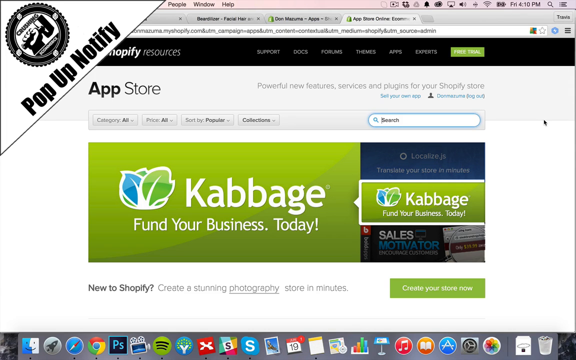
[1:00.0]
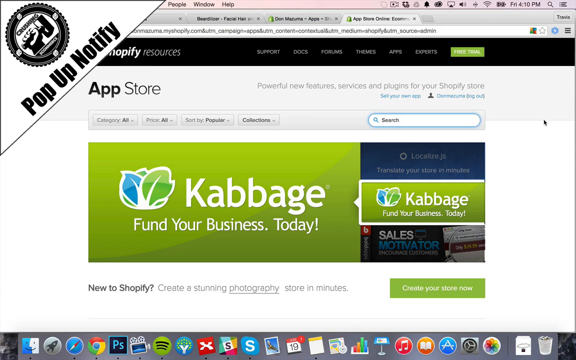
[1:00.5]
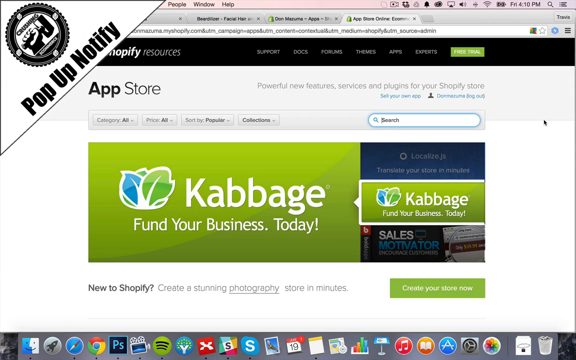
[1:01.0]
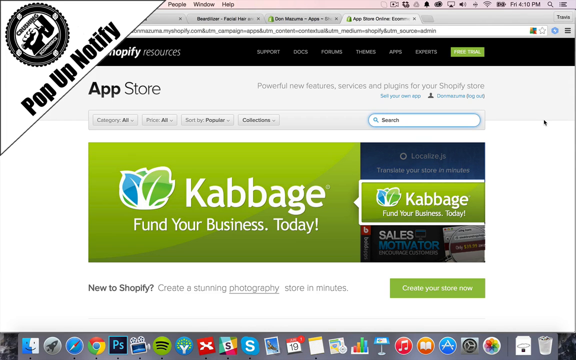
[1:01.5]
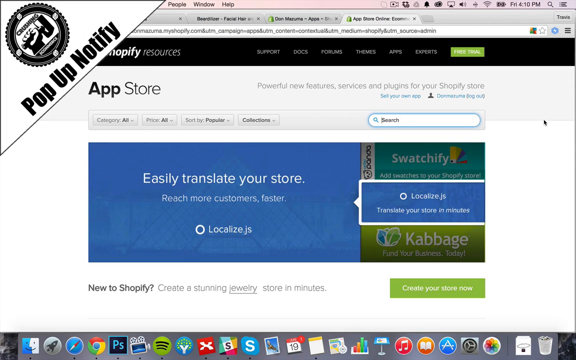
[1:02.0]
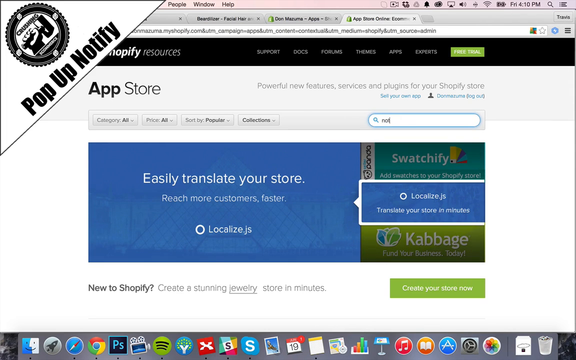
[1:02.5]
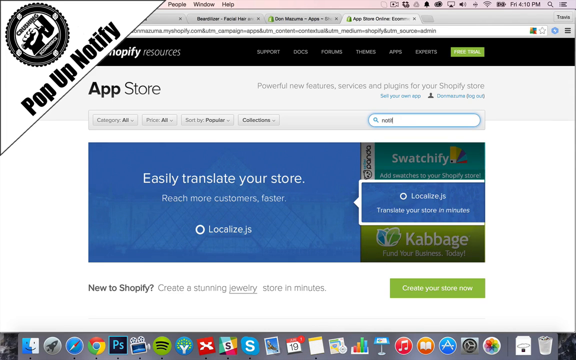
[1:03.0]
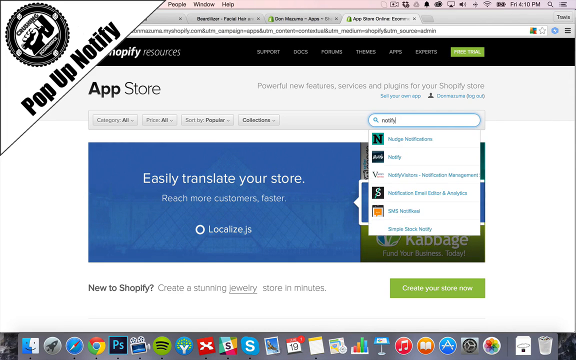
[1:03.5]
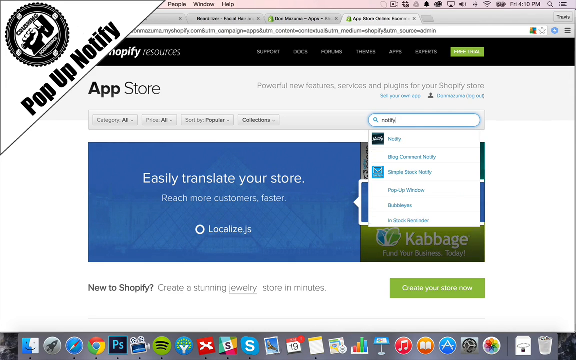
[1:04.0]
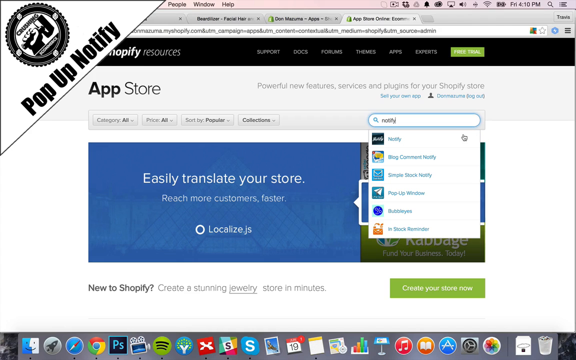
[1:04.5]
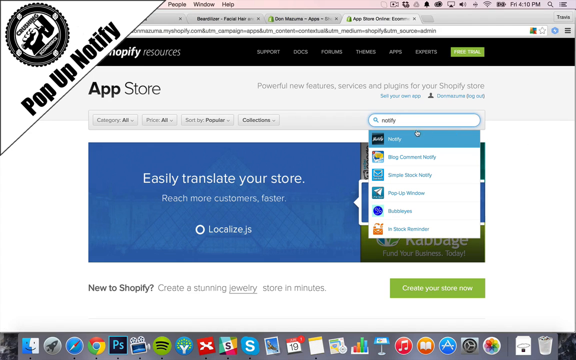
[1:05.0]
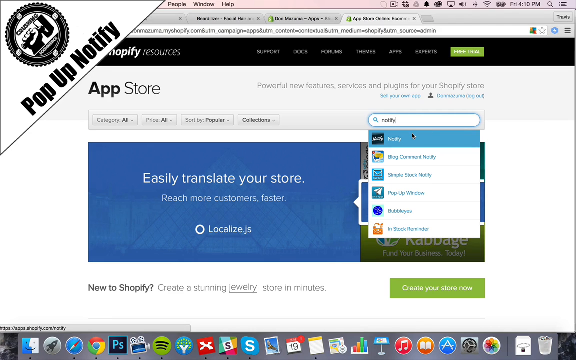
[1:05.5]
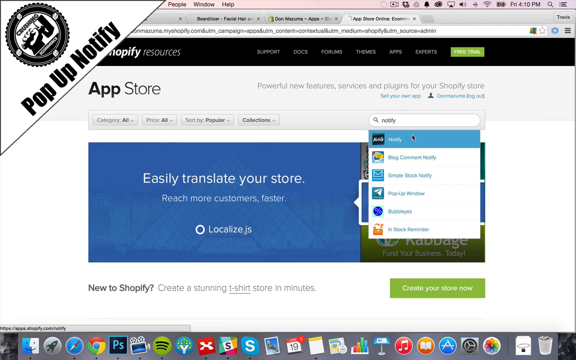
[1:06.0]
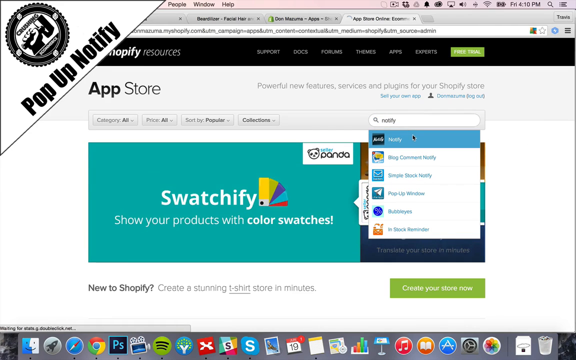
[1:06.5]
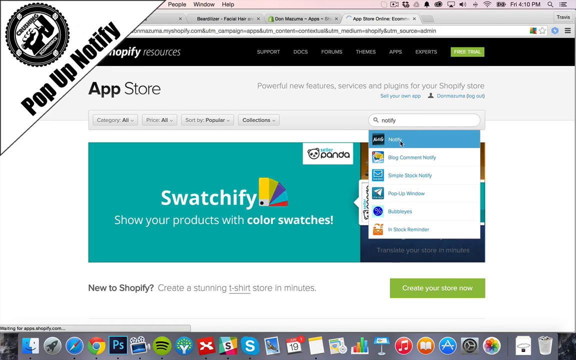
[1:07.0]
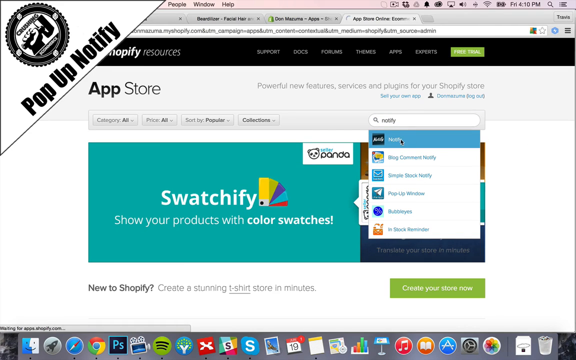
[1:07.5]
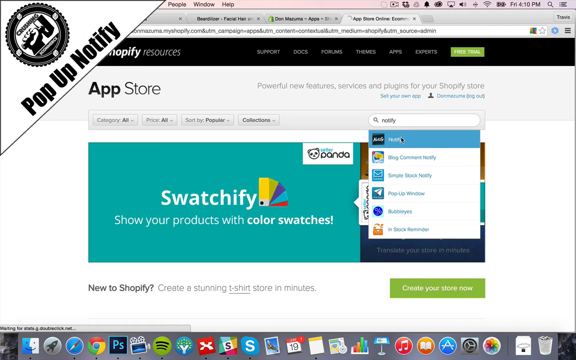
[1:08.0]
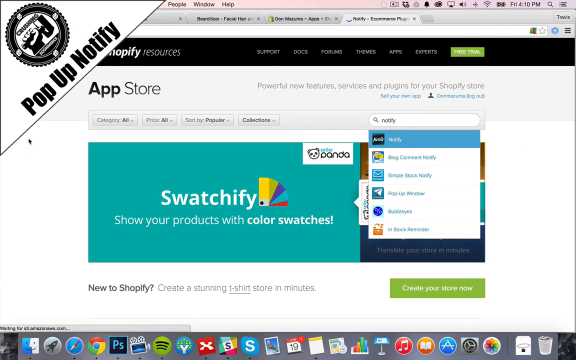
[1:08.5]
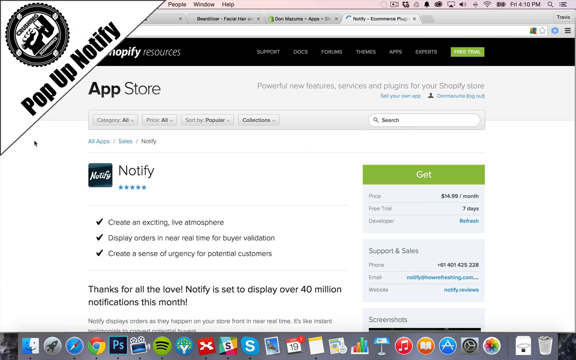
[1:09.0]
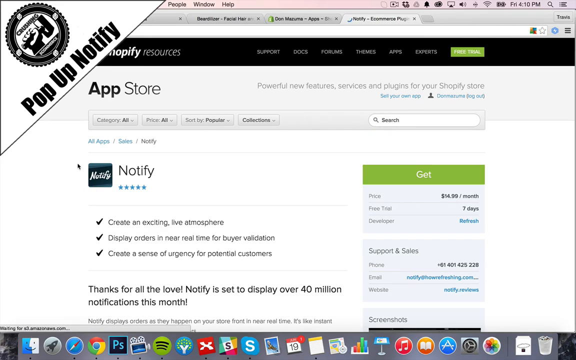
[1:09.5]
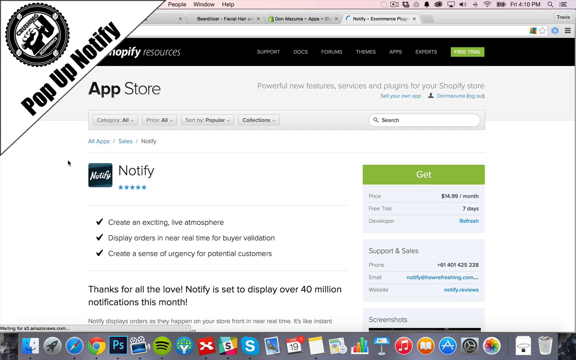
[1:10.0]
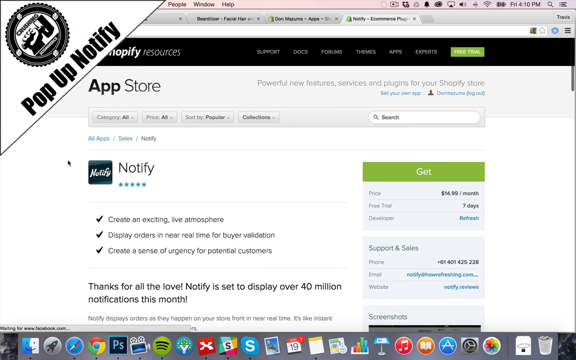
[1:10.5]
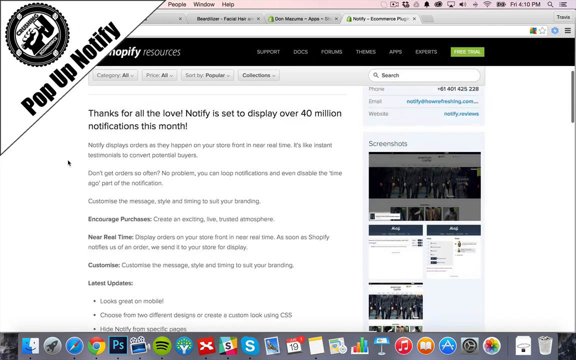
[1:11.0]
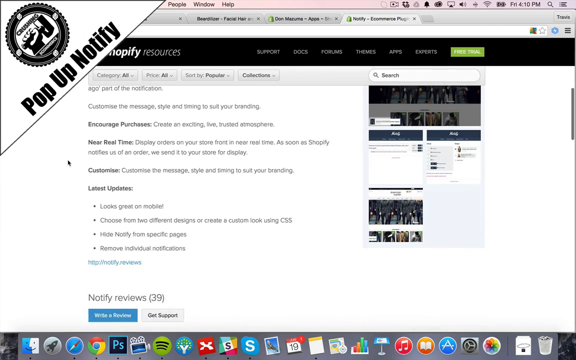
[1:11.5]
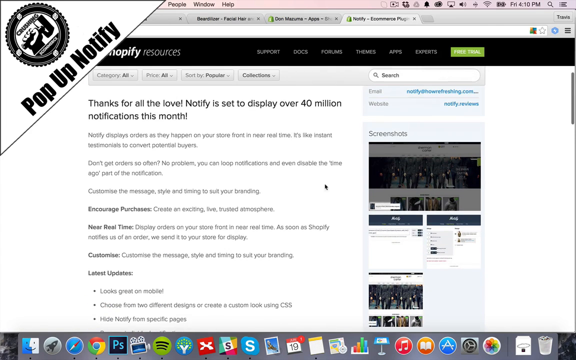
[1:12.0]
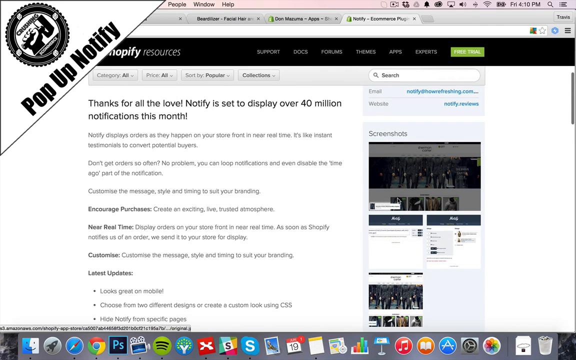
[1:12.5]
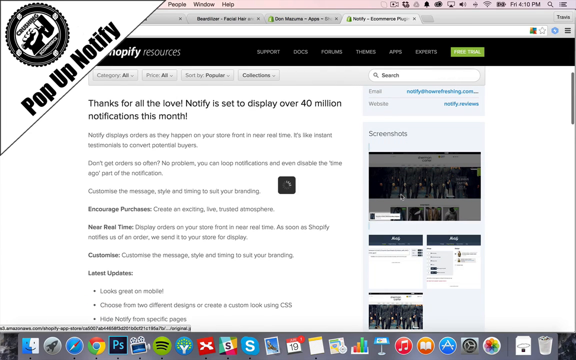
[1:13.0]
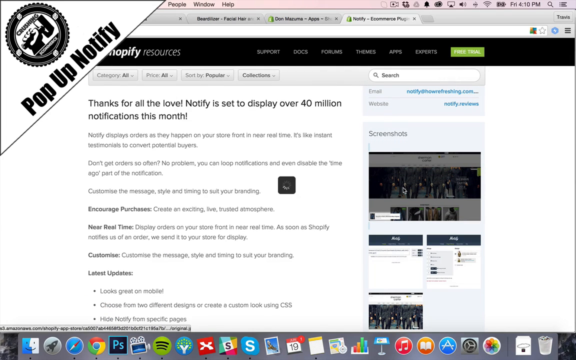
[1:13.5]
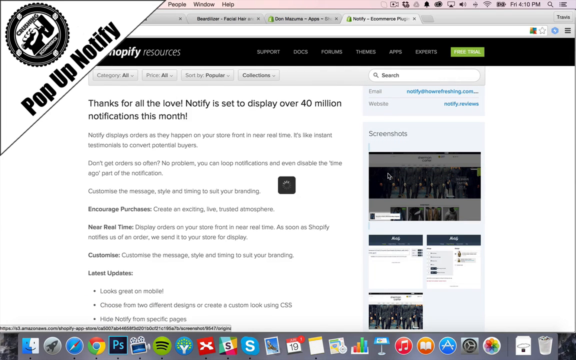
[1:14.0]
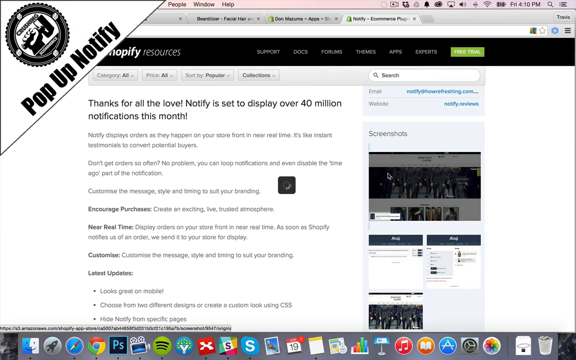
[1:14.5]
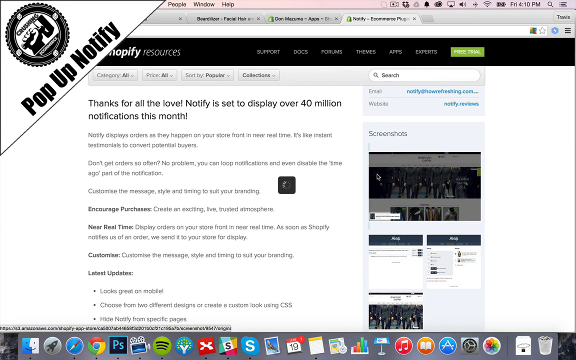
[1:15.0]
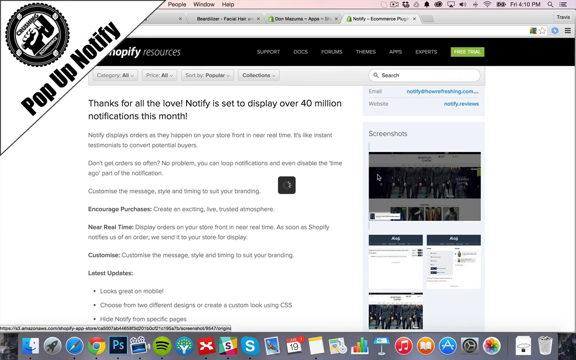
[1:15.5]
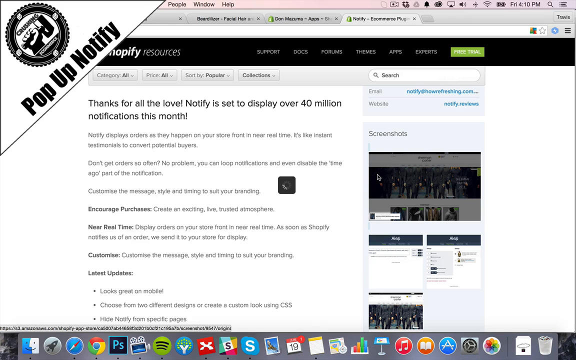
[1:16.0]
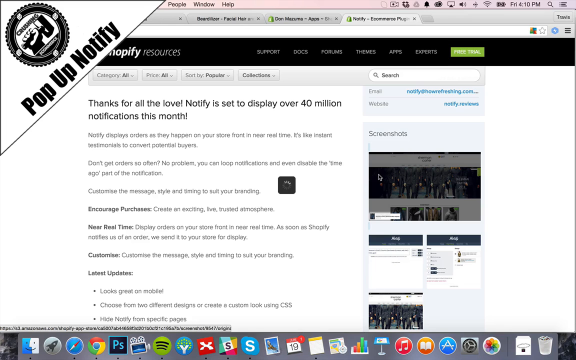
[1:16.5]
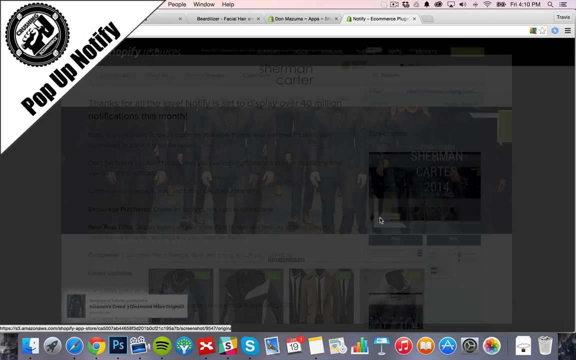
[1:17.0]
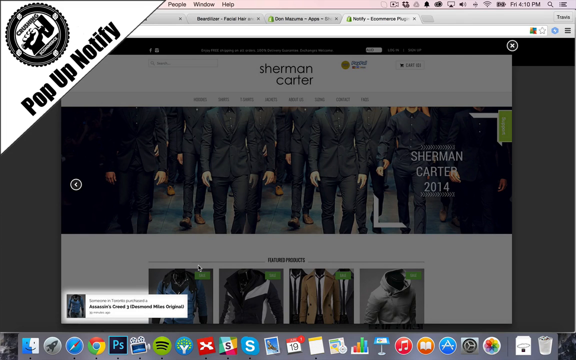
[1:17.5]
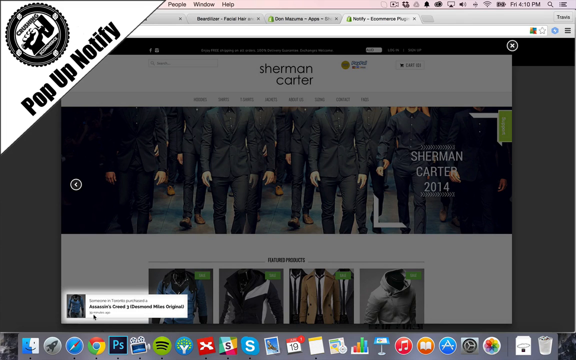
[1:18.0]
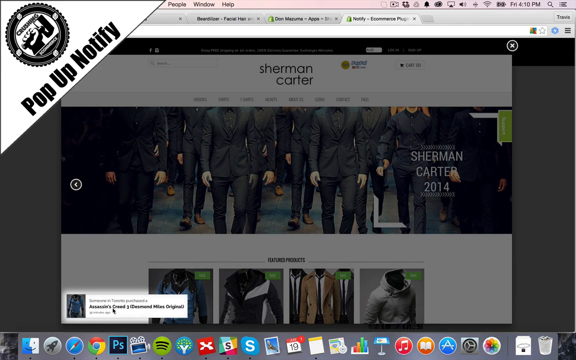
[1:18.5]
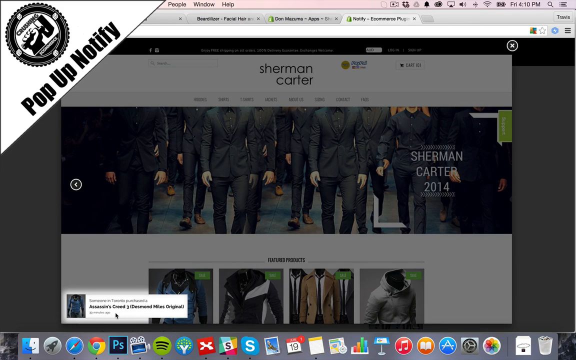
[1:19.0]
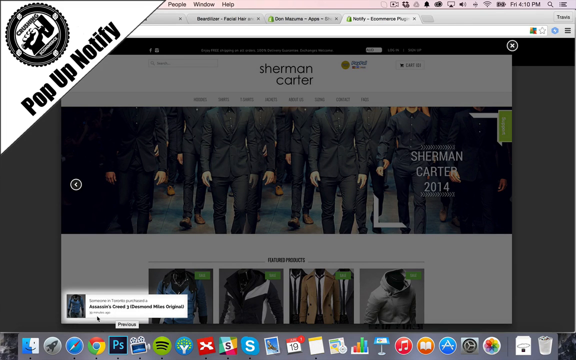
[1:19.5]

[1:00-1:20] The company logo and the words "Pop-Up Notifier" are in the upper left-hand corner. The person is on Shopify: in the top left corner the page reads "Shopify Resources", with the S cut off by the Pop-Up Notifier. The tabs at the top include "Support", "Docs", "Forums", "Themes", "Apps", "Experts" and "Free trial". Beneath them it reads "App Store" and "Powerful new features and plugins for your Shopify store". Kabbage appears with "Fund your business today!", along with "New to Shopify? Create a stunning photography store in minutes" and "Create your store now". The person types something hard to see that seems to end in "ly", then types "Notify", and the Notify app comes up, showing "Latest updates" with "looks great on mobile". The mouse hovers over "Screenshots".